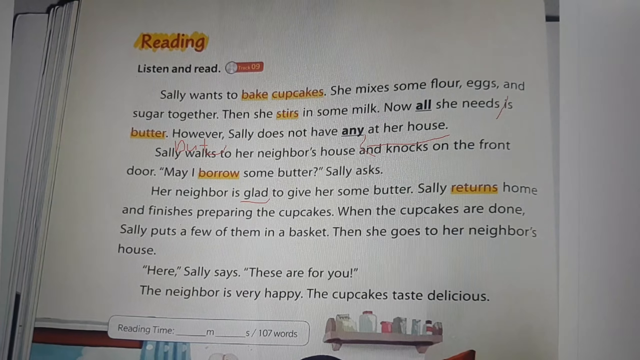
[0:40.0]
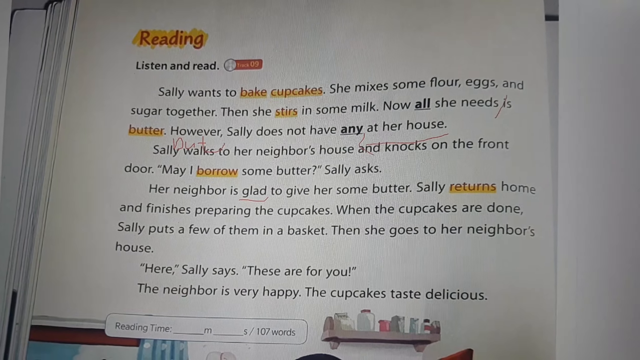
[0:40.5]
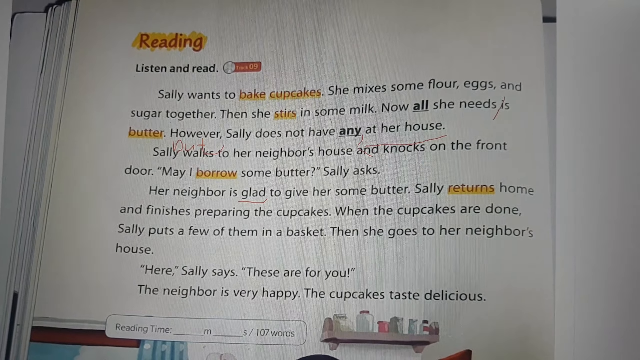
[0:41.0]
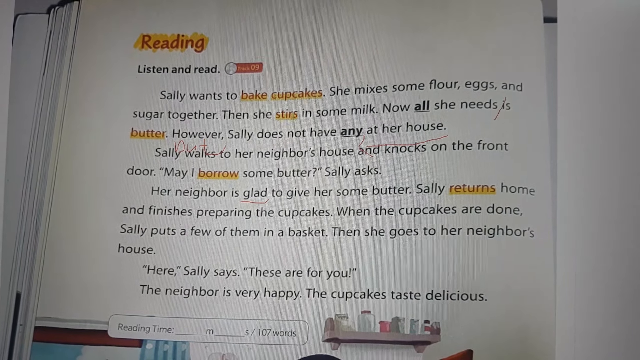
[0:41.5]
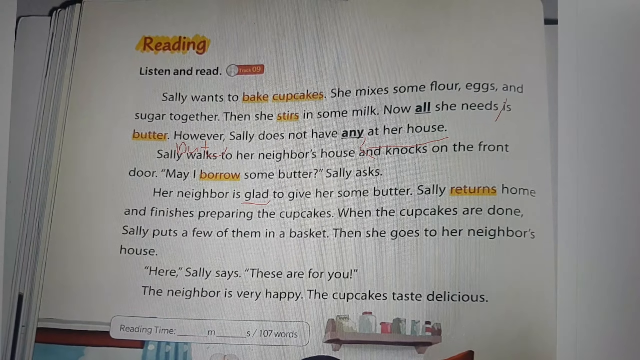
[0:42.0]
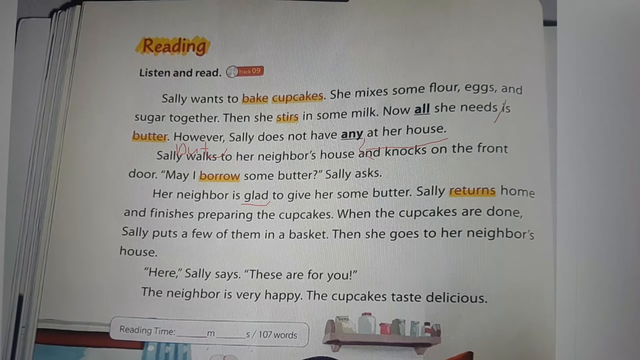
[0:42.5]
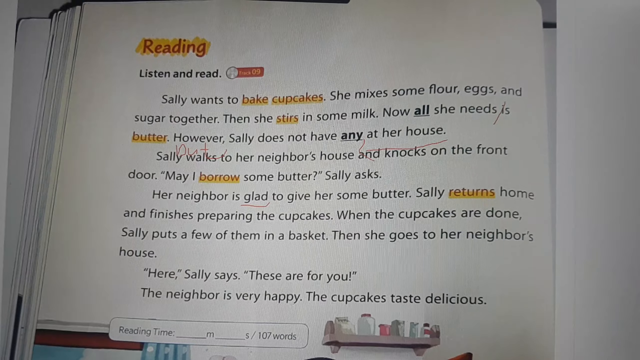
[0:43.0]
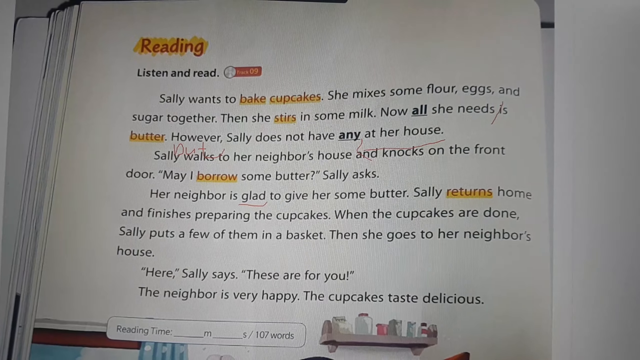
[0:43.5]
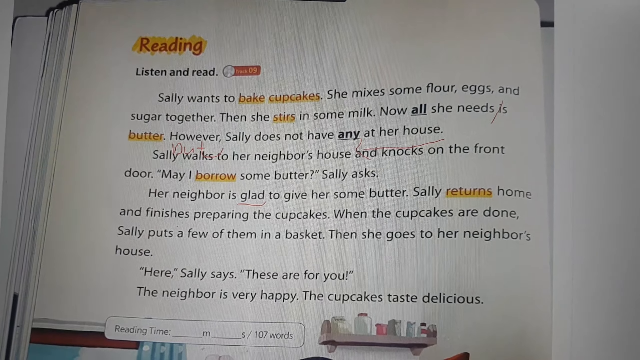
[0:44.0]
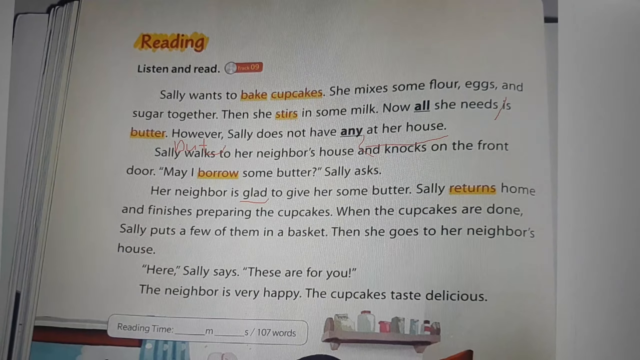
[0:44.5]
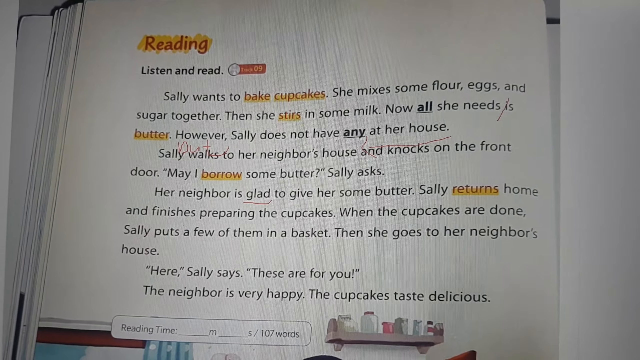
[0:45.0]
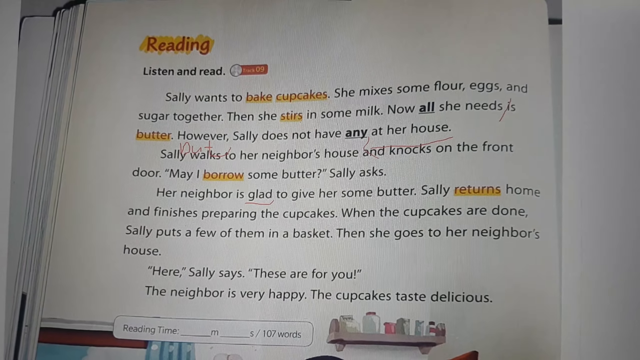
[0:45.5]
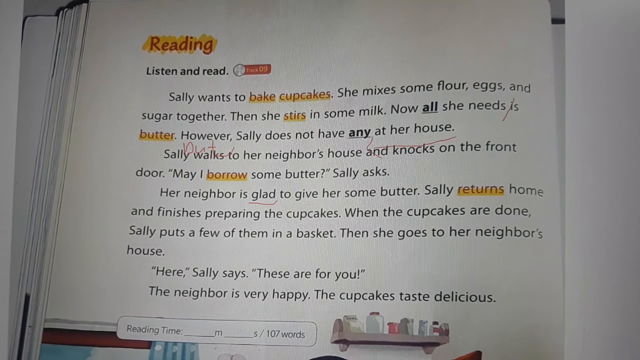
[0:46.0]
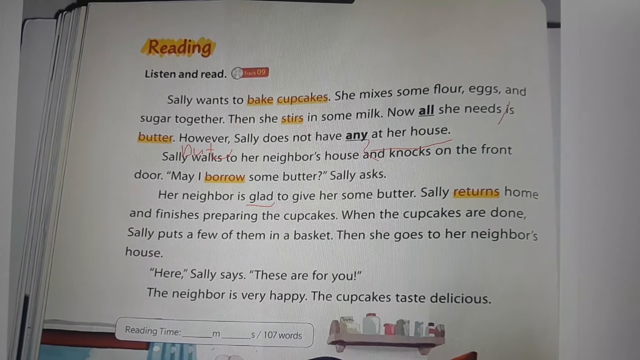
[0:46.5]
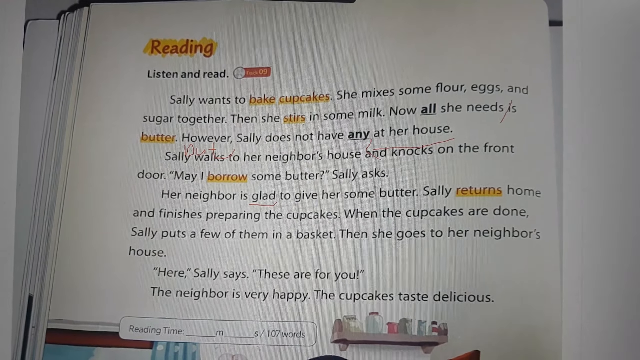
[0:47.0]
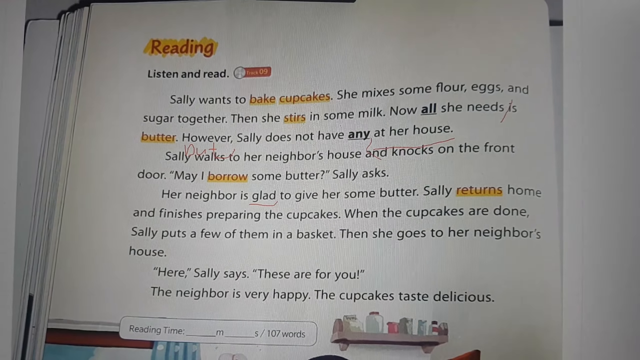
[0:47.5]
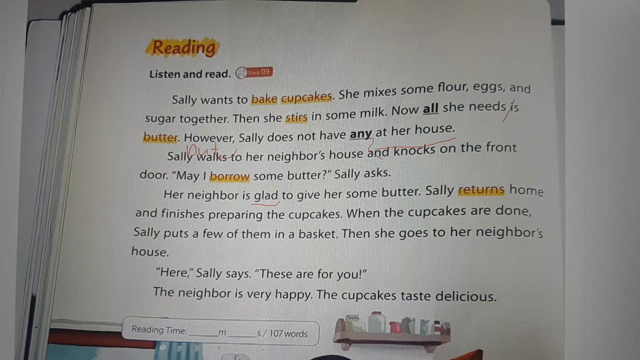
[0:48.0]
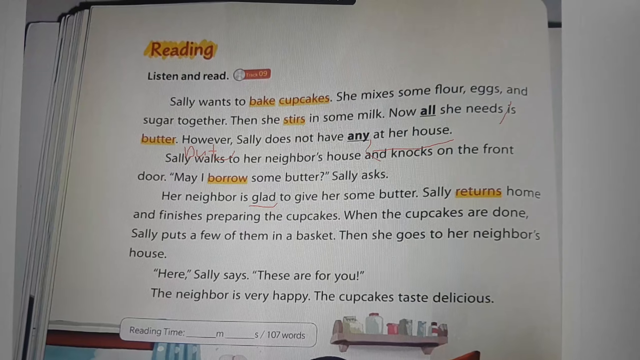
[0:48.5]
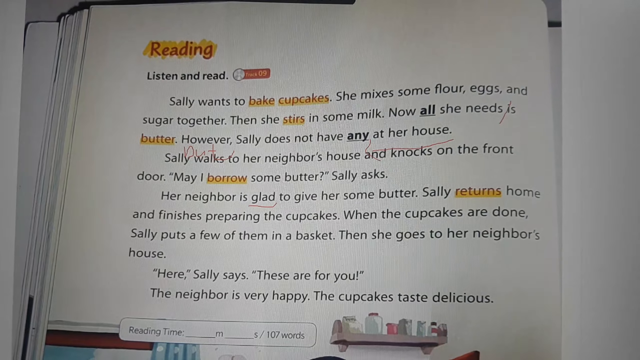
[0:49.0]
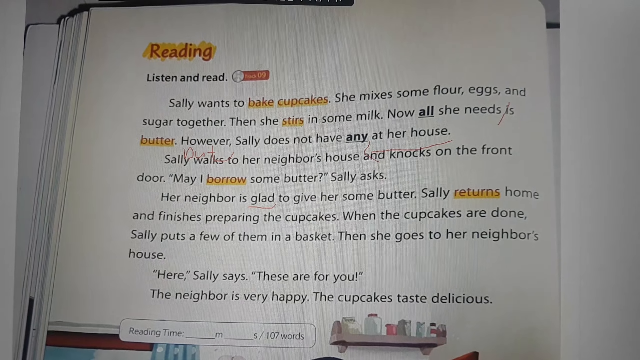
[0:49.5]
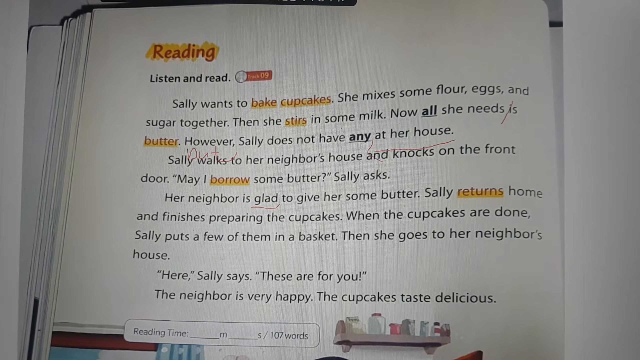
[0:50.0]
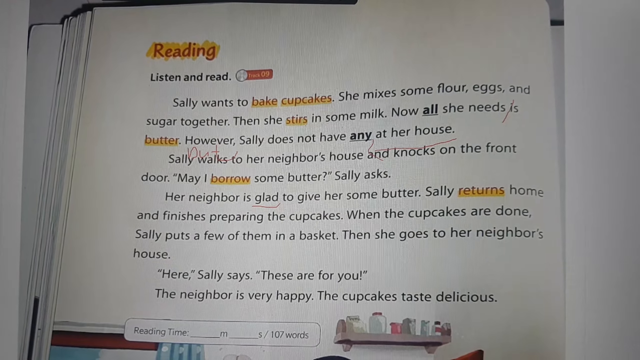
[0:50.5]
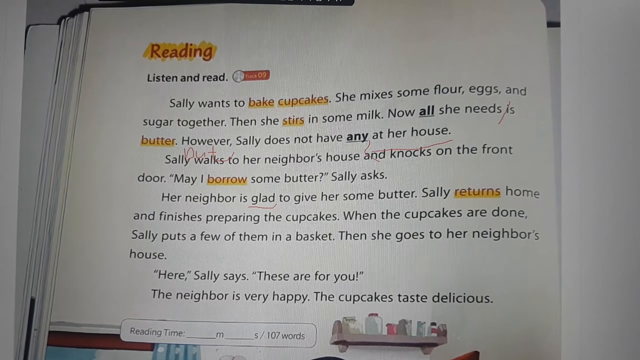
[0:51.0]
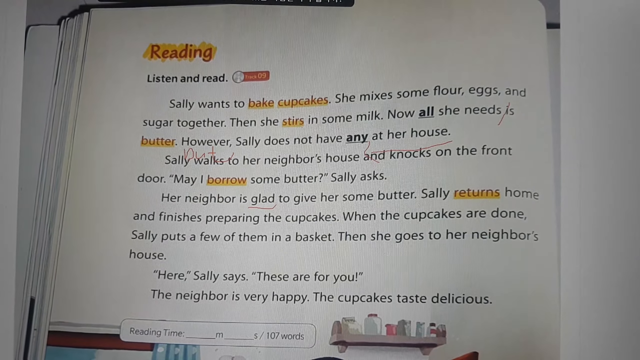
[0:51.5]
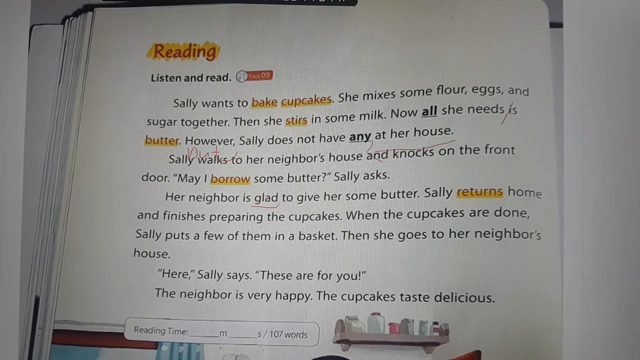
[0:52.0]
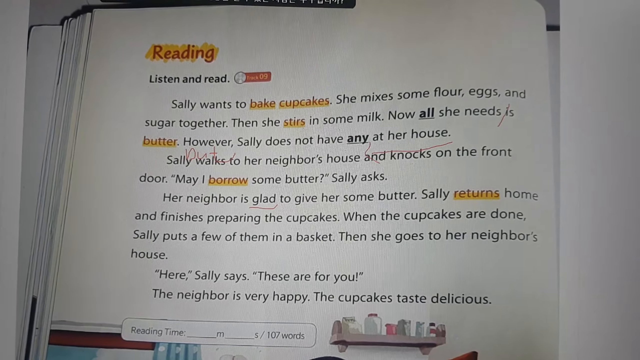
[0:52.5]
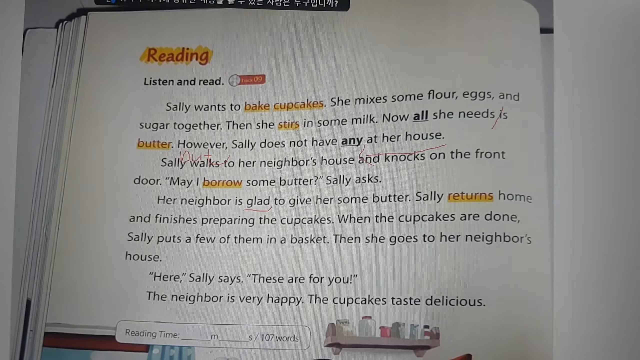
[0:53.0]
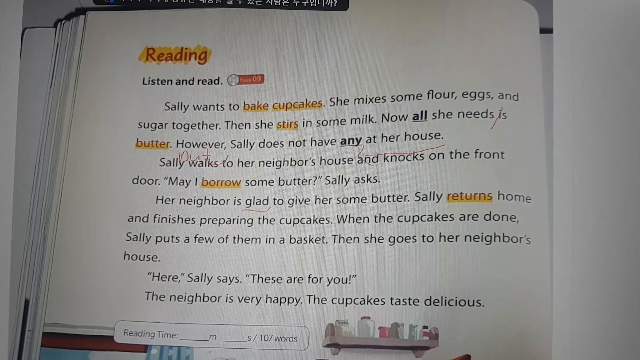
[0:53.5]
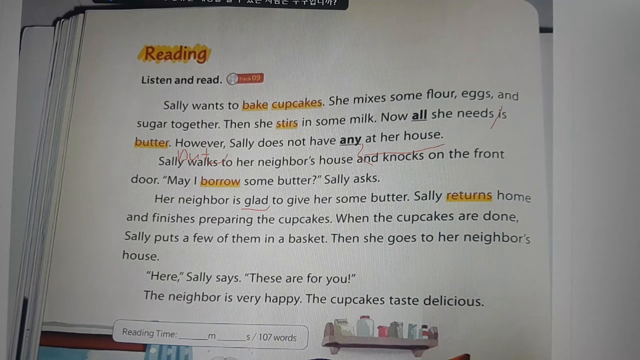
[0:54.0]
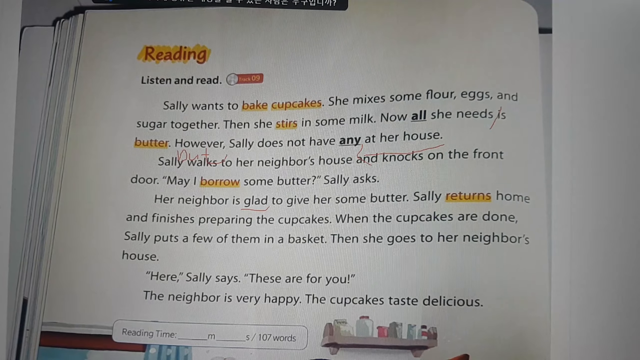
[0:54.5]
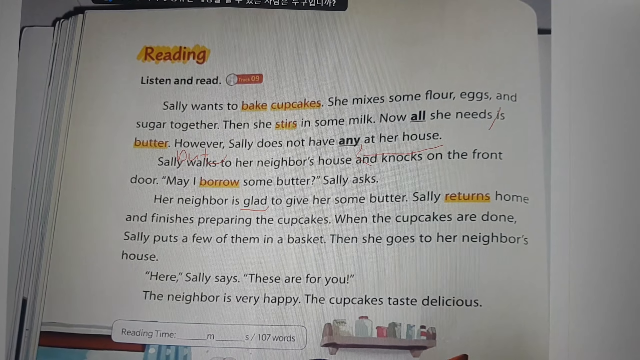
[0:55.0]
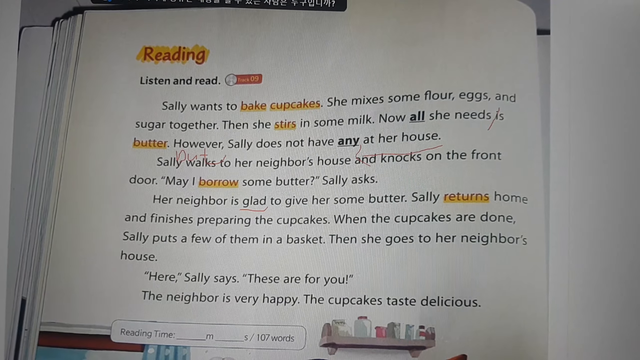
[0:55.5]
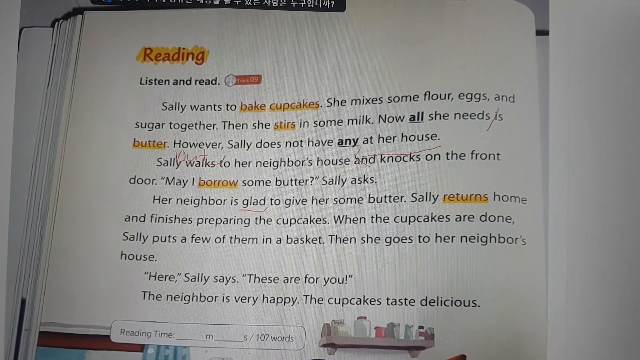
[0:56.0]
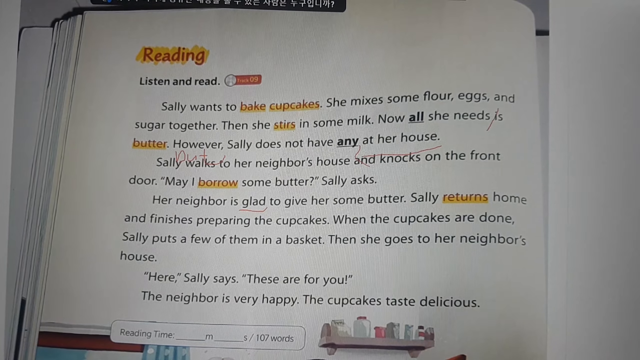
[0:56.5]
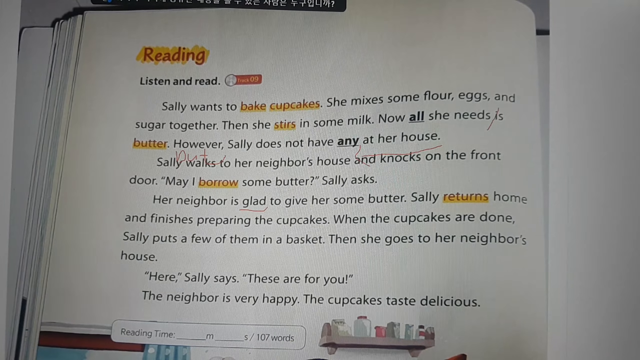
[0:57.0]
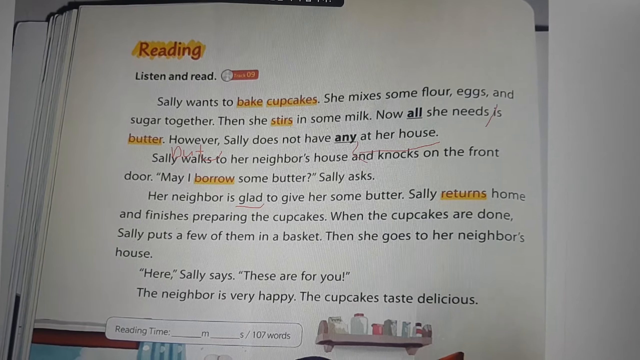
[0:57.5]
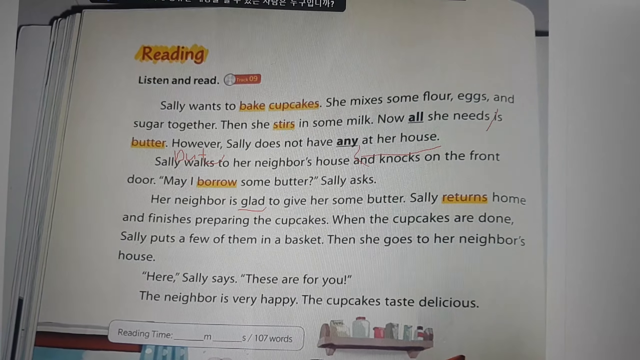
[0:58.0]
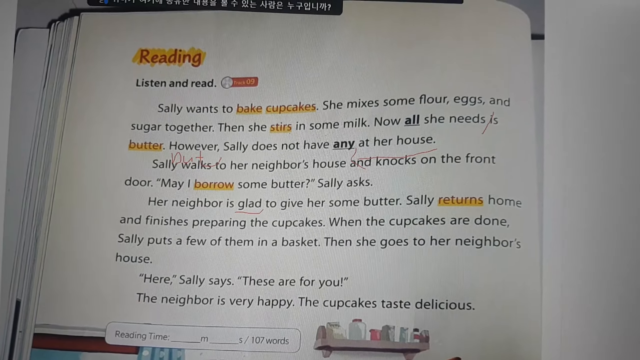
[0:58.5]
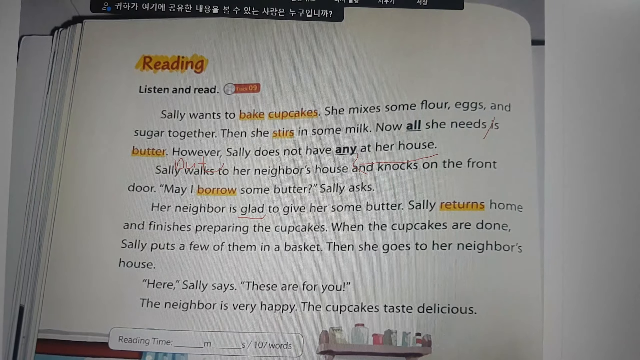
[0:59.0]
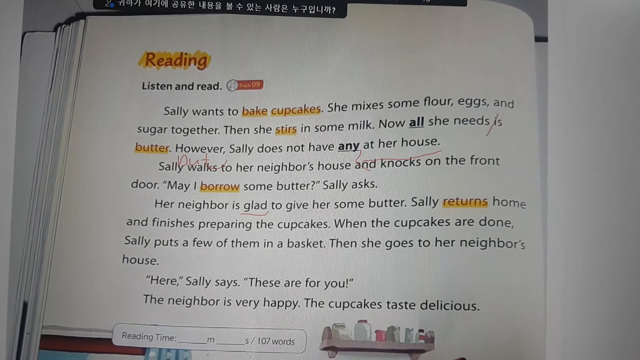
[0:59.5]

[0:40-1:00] The same page remains on screen, essentially unchanged. After Sally asks for butter, the story continues: "Her neighbor is glad to give her some butter. Sally returns home and finishes preparing the cupcakes. When the cupcakes are done, Sally puts a few of them in a basket and she goes to her neighbor's house. Here, Sally says, these are for you. The neighbor is very happy. Cupcakes taste delicious." The page has a white background, like a piece of paper.